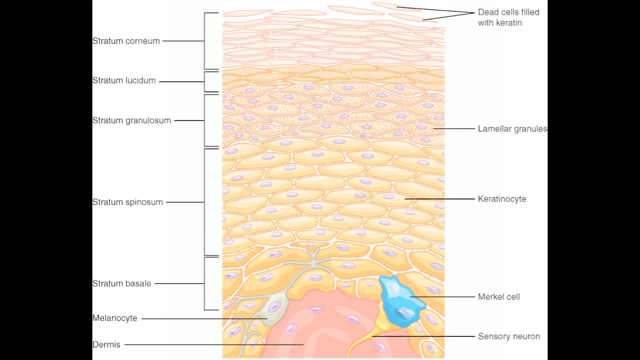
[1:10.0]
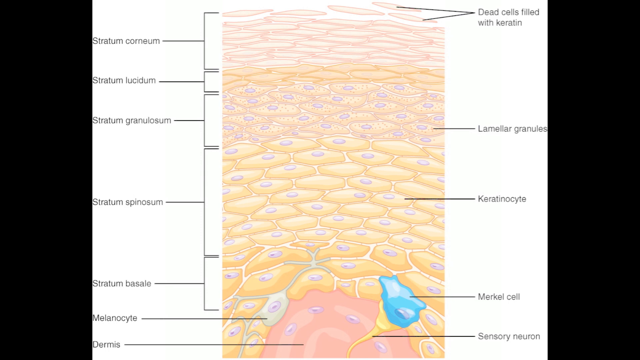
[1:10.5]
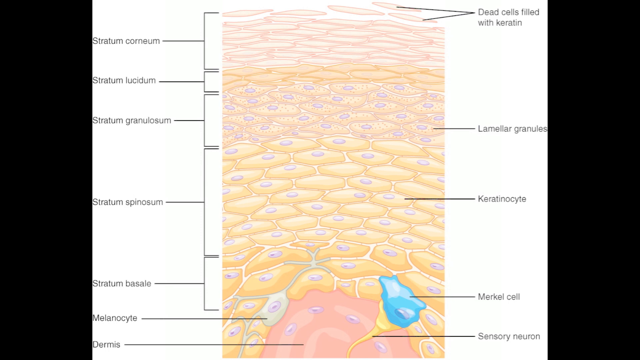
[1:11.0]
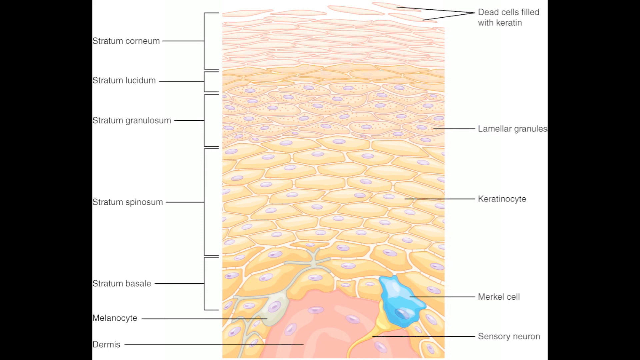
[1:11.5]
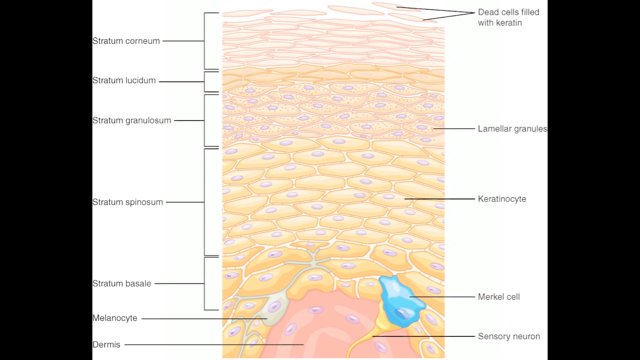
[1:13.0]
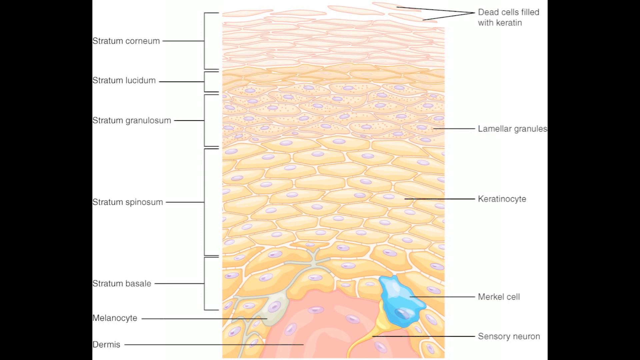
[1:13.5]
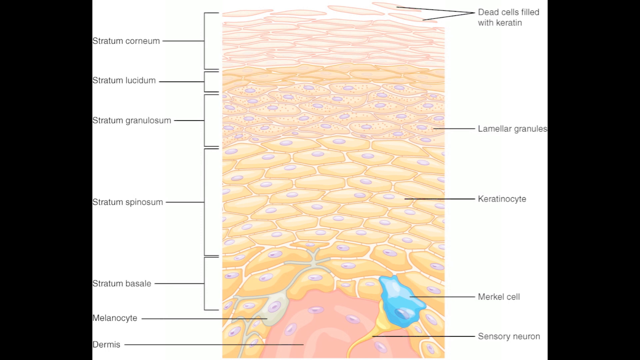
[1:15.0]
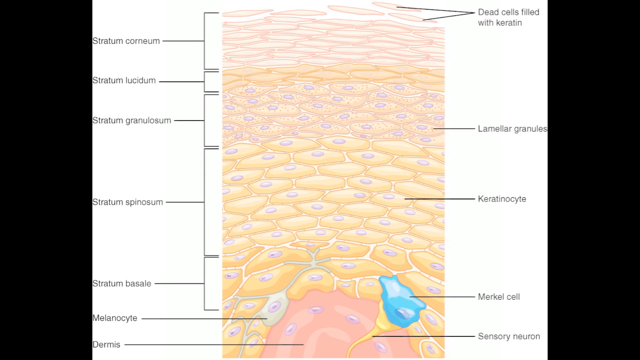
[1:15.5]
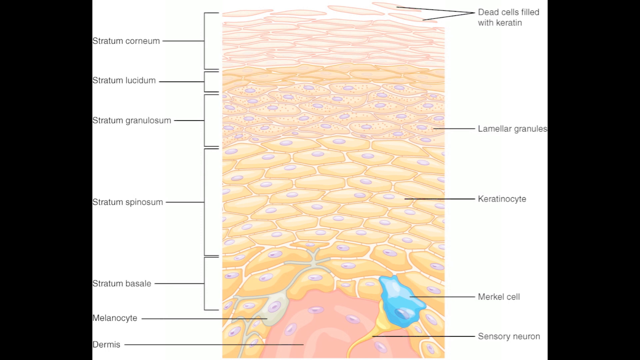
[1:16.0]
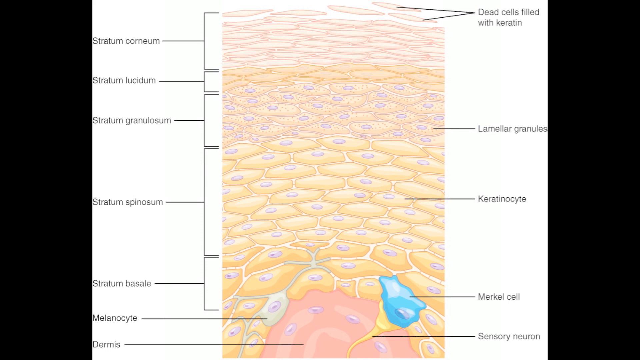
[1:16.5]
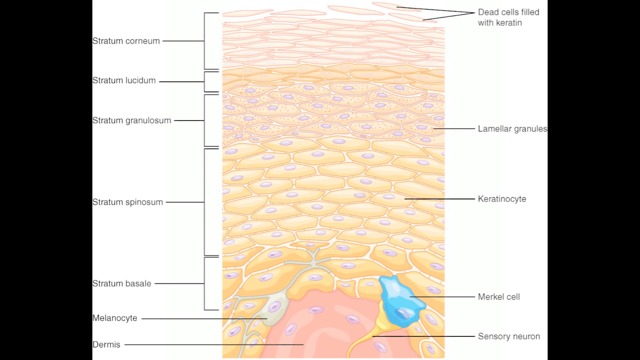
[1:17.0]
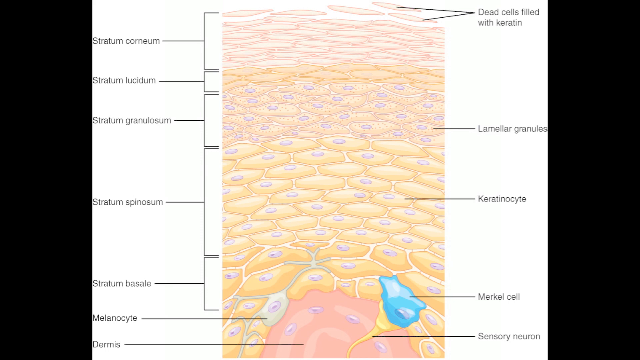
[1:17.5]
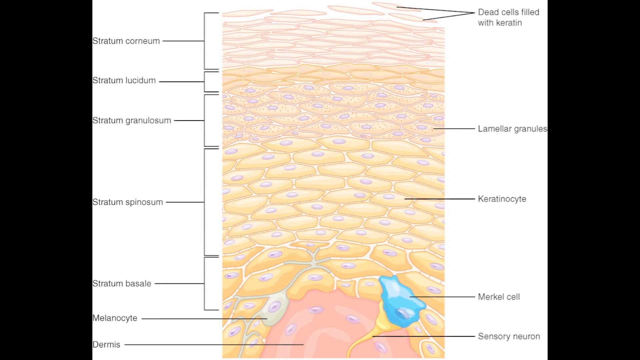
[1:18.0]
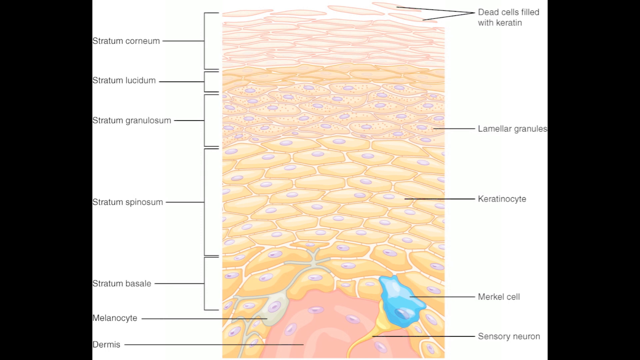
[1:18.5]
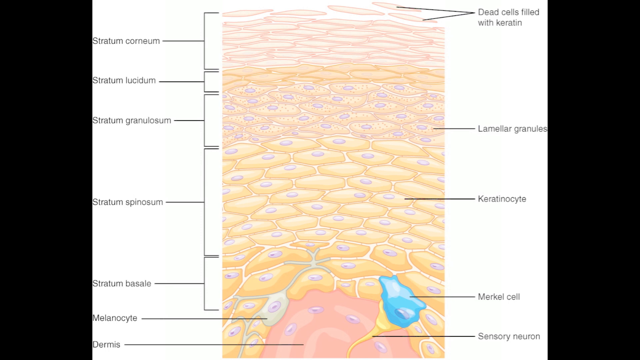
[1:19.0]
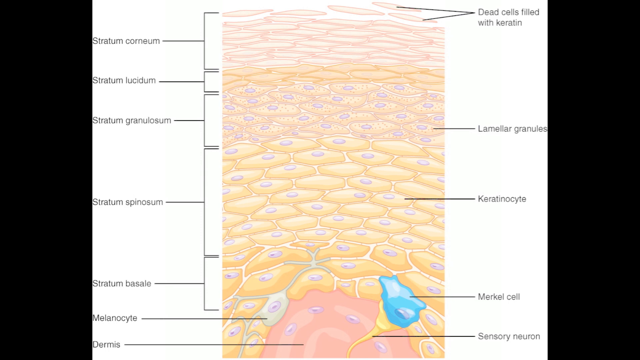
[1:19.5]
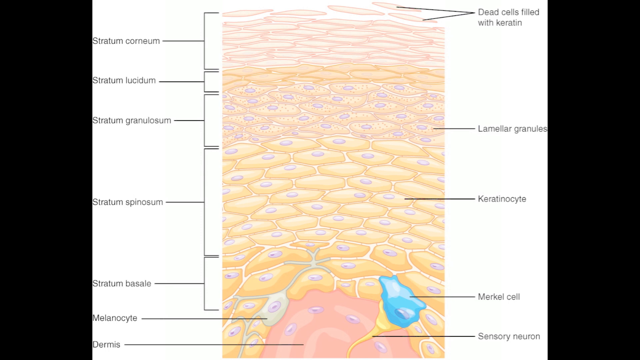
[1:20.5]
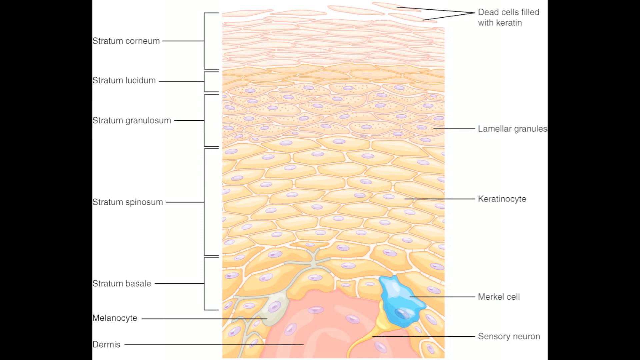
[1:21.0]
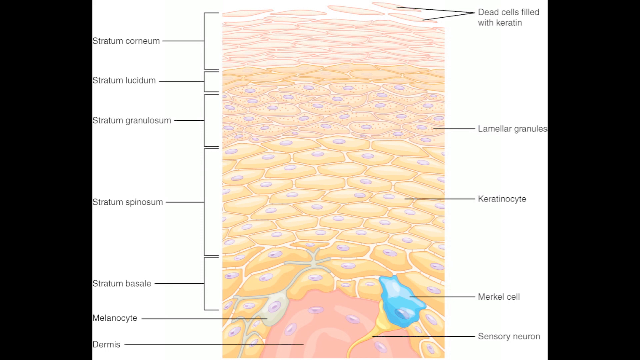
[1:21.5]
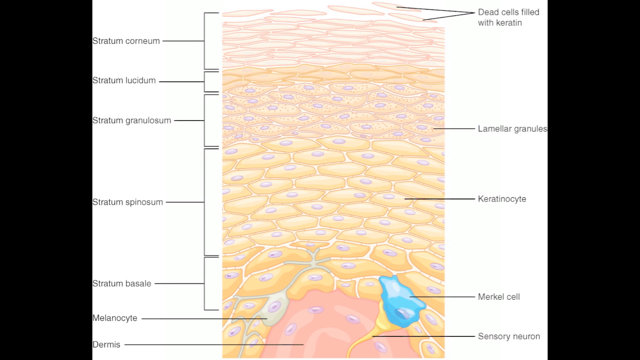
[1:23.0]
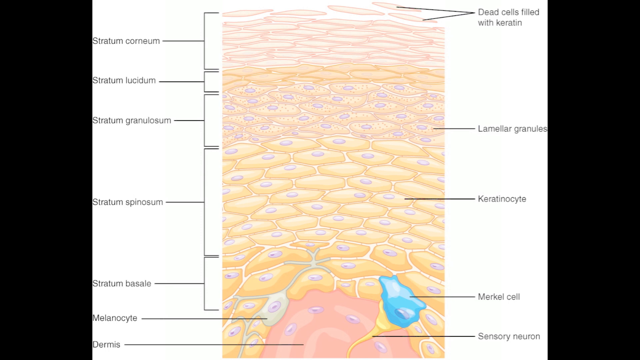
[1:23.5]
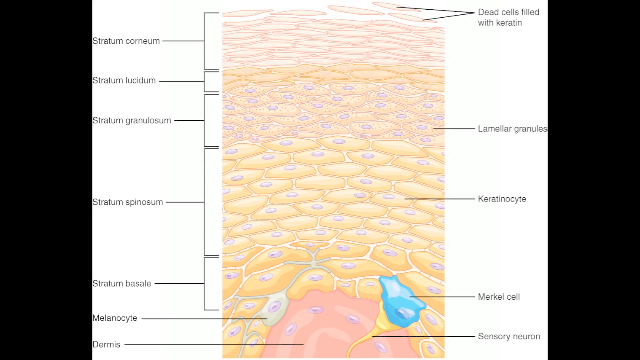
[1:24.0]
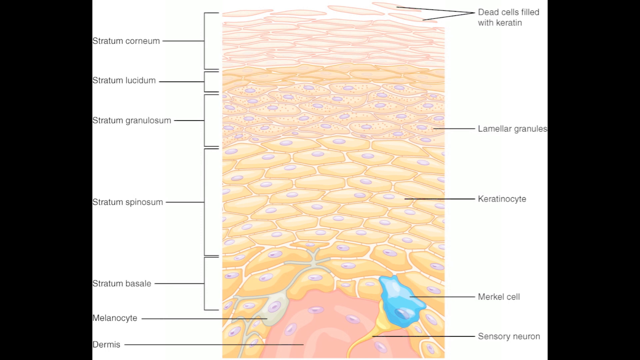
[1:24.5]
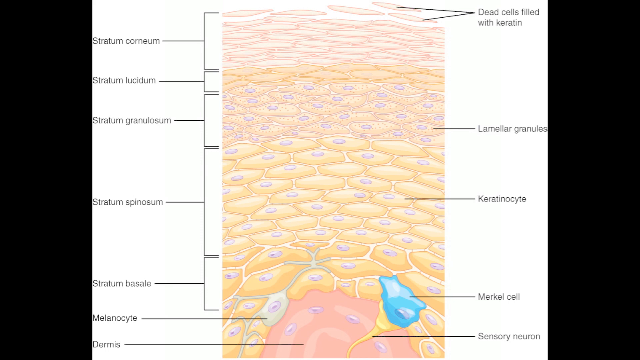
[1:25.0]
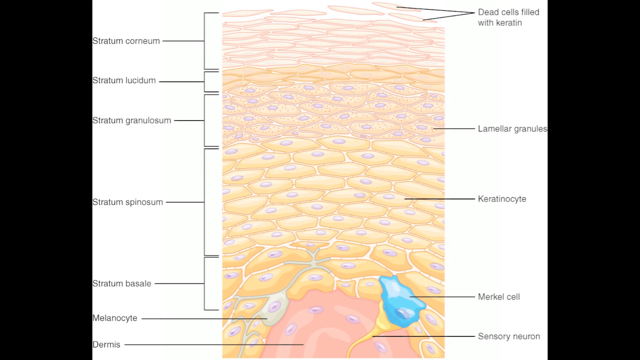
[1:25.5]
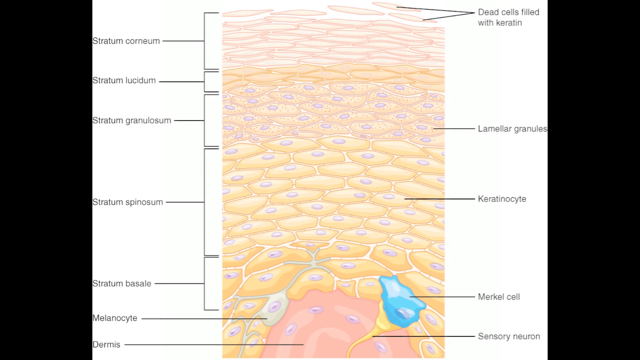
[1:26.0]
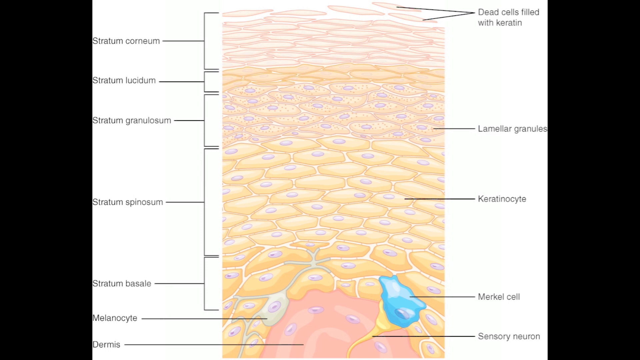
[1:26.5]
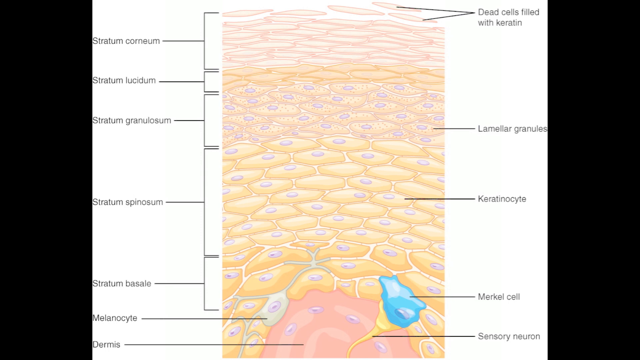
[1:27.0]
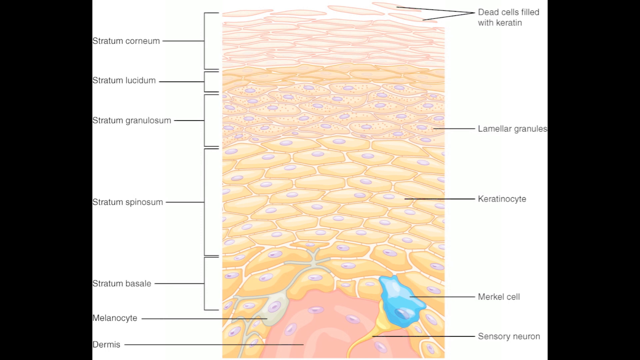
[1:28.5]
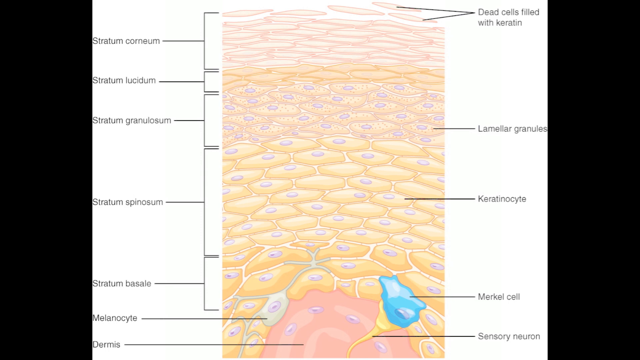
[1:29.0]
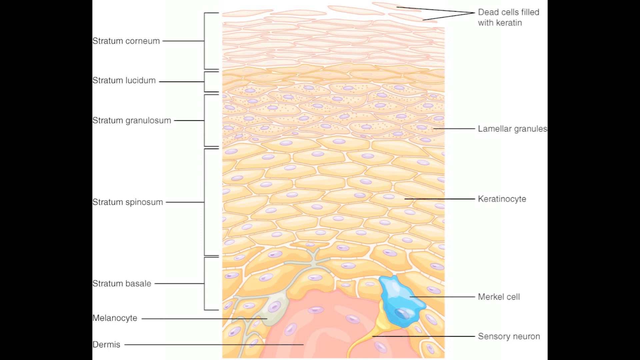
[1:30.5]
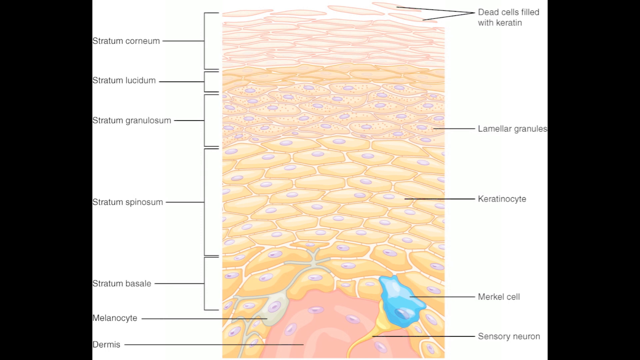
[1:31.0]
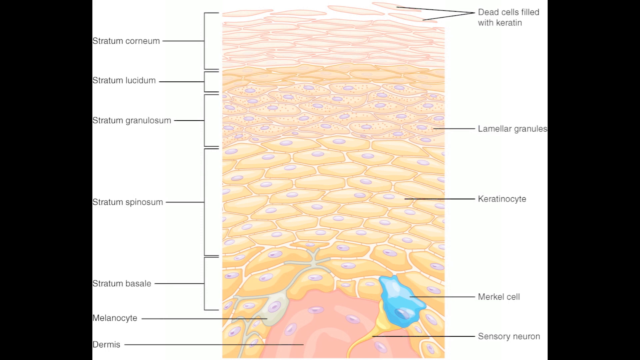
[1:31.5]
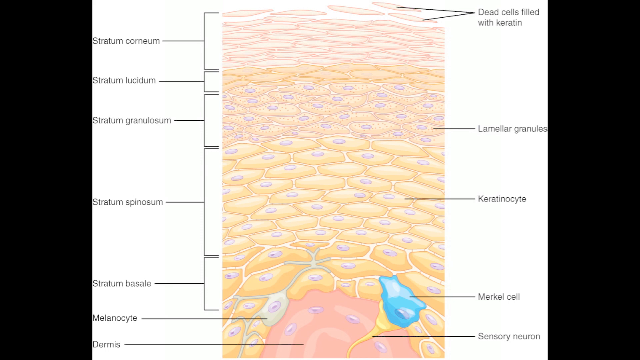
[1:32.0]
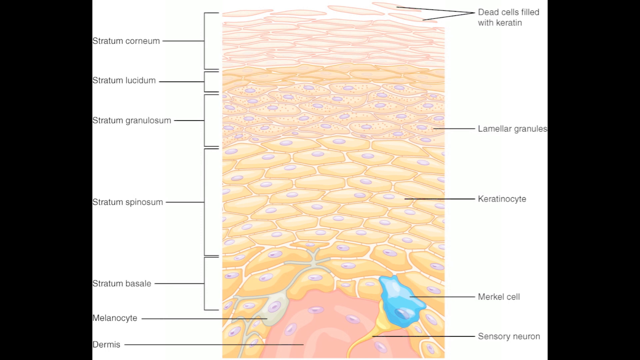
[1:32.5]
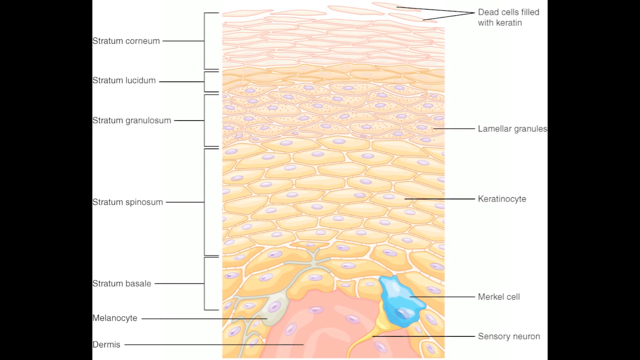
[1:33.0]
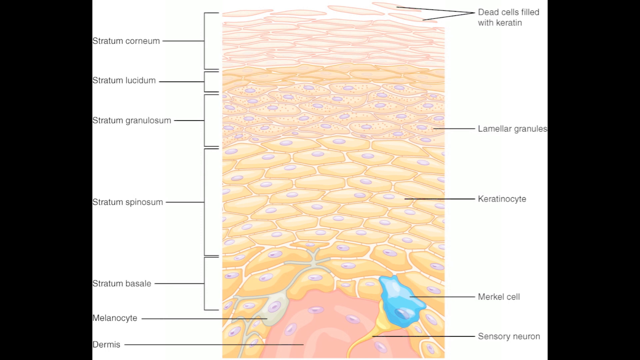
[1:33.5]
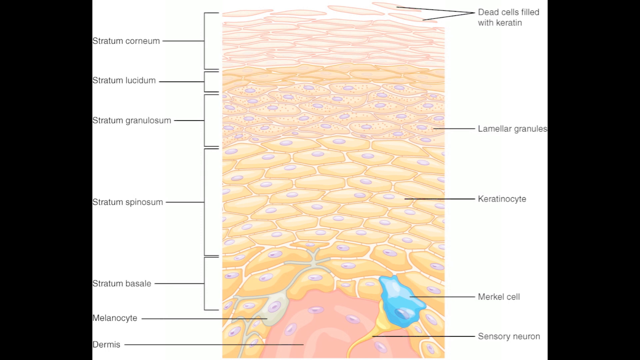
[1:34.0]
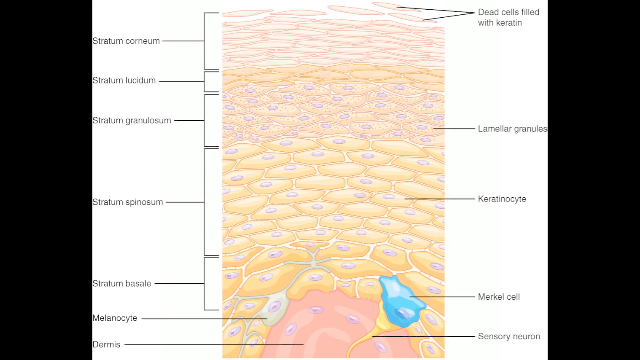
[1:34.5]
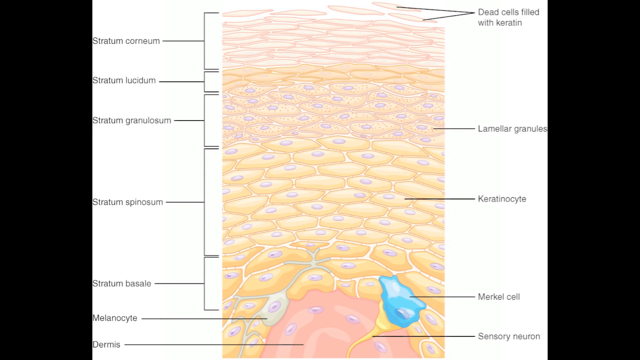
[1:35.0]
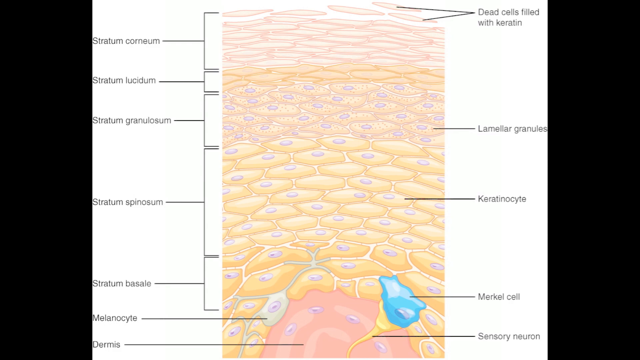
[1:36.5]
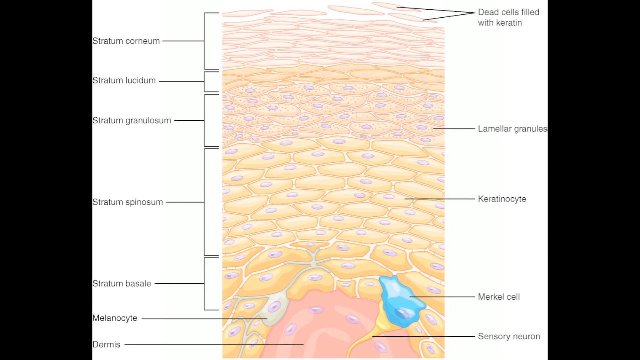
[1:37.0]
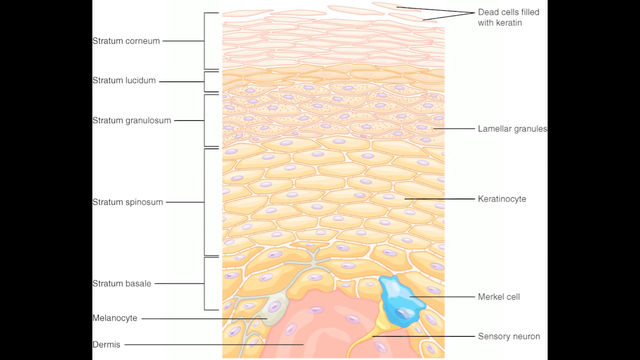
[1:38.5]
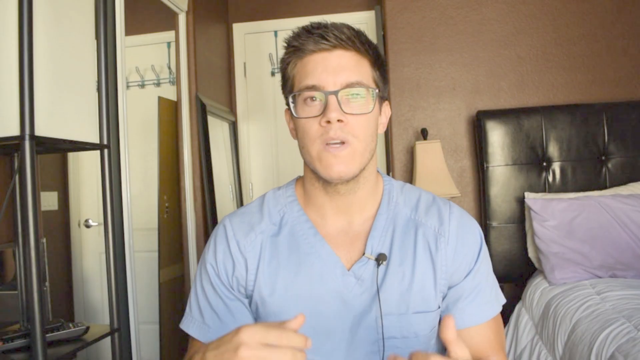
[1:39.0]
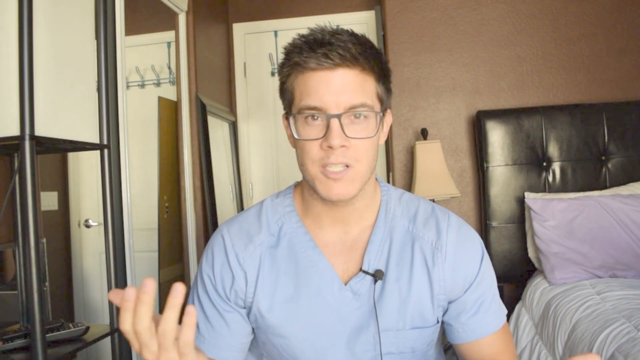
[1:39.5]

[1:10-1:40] Many things are shown together in what seems to be the human body, apparently the skin of a human body, with a lot of elements. Terms shown include "basal", "dead cells filled with protein" and "keratinized", among other cell names.